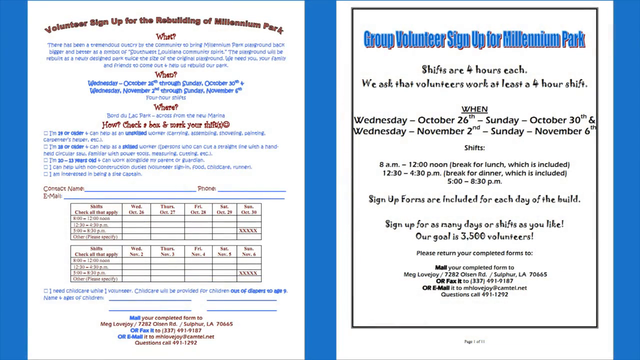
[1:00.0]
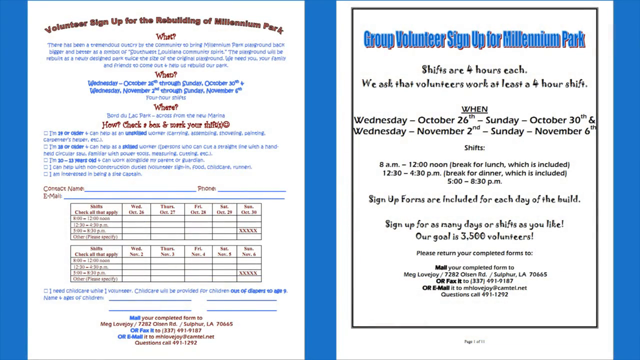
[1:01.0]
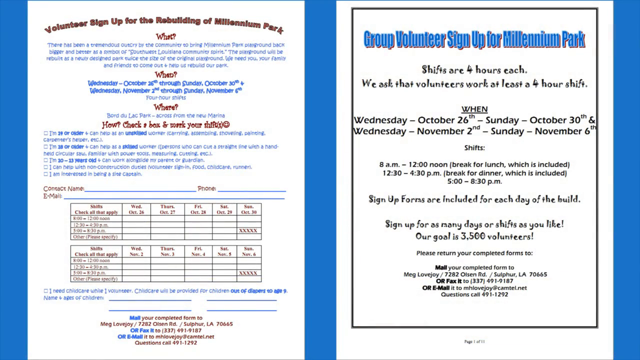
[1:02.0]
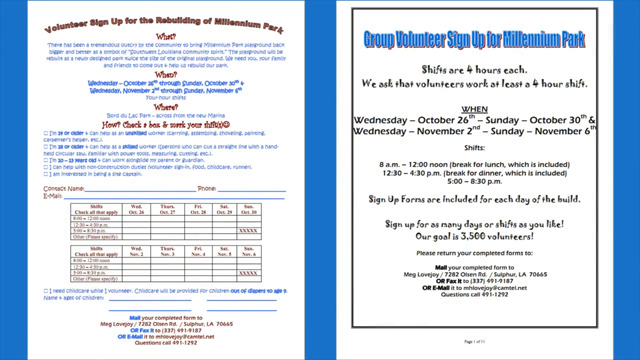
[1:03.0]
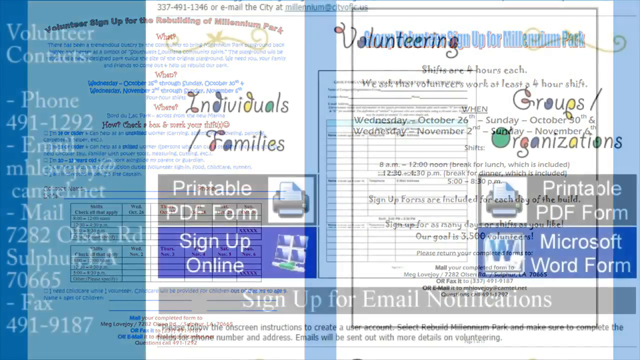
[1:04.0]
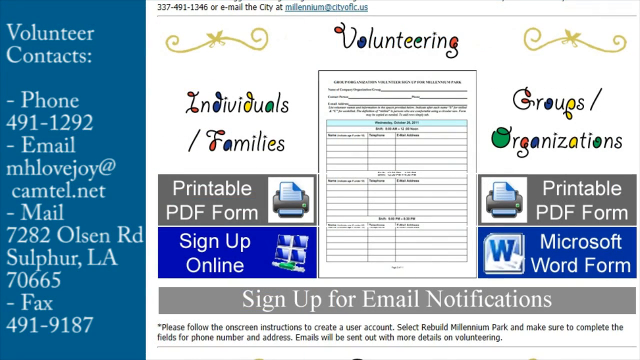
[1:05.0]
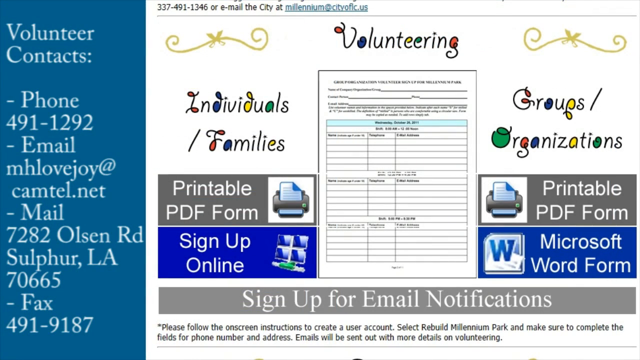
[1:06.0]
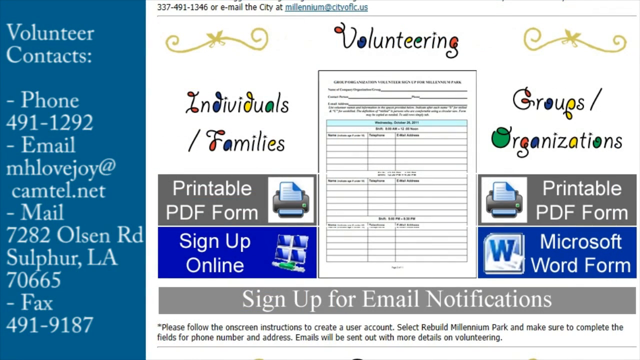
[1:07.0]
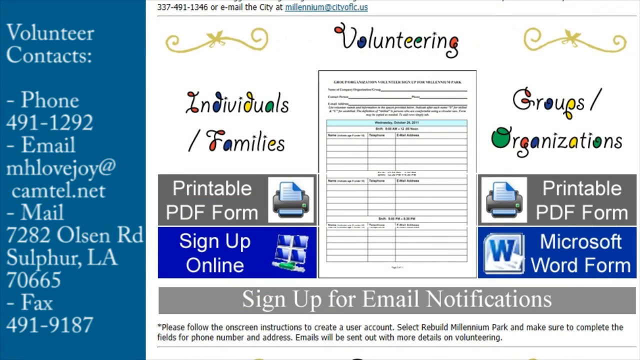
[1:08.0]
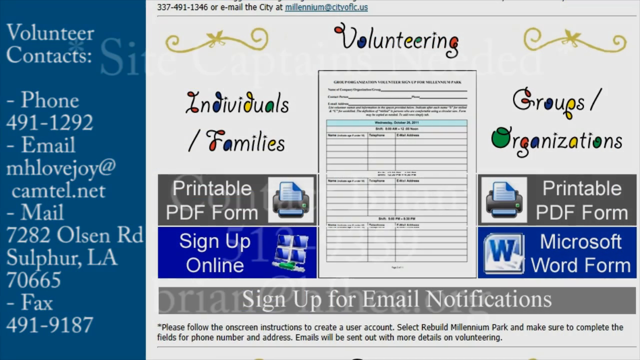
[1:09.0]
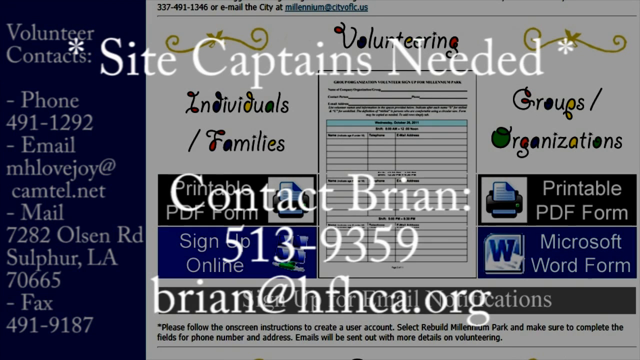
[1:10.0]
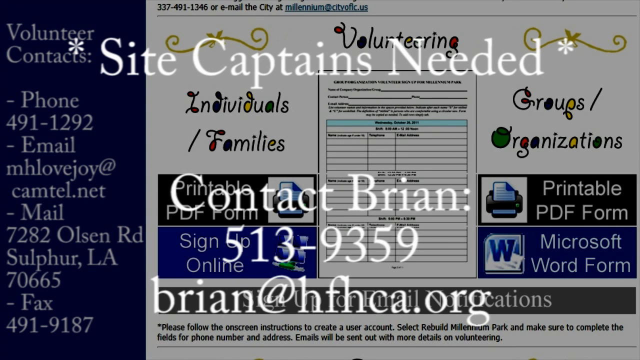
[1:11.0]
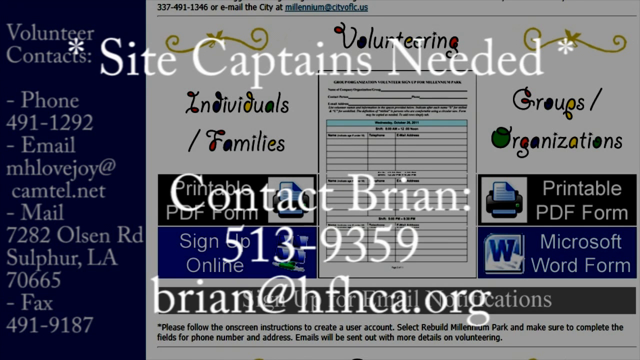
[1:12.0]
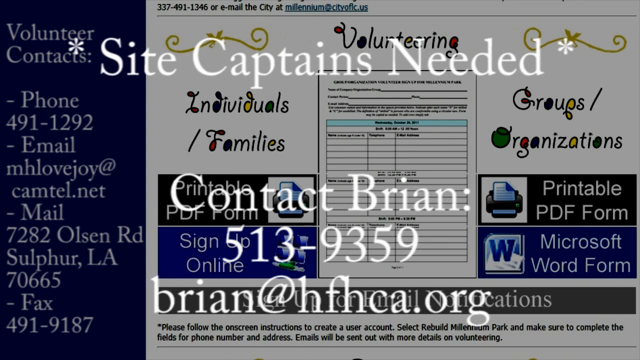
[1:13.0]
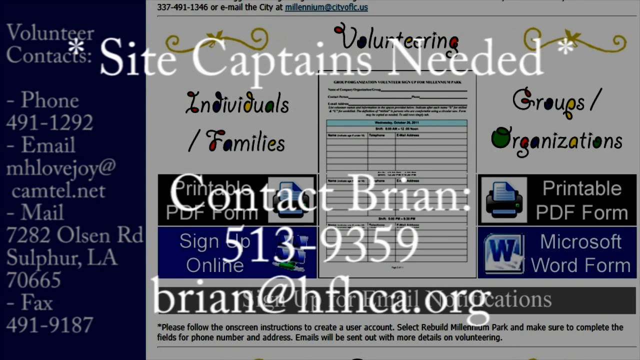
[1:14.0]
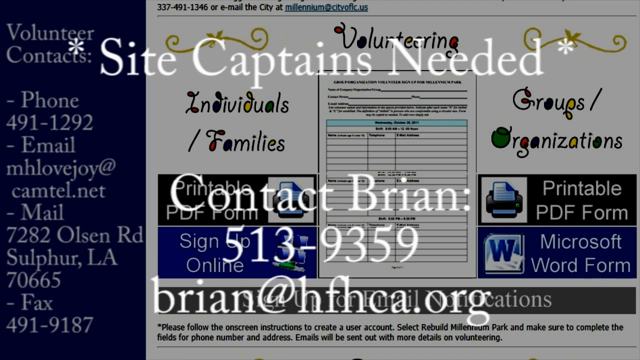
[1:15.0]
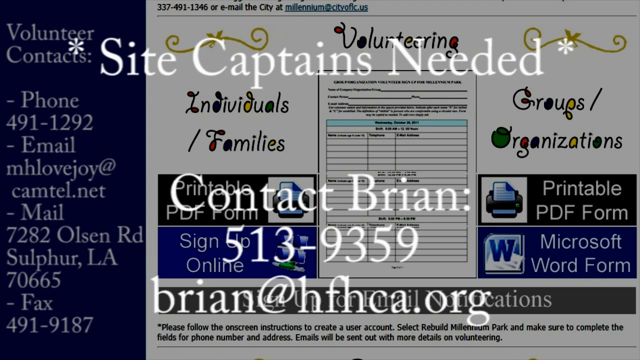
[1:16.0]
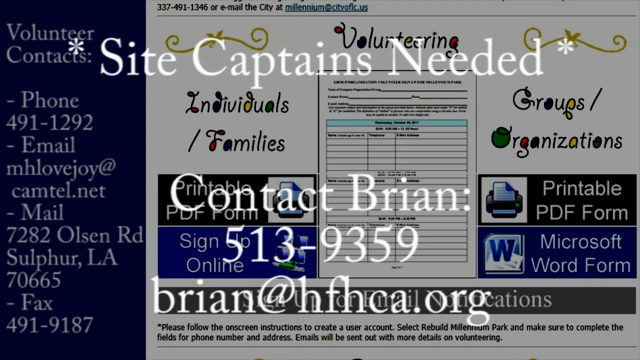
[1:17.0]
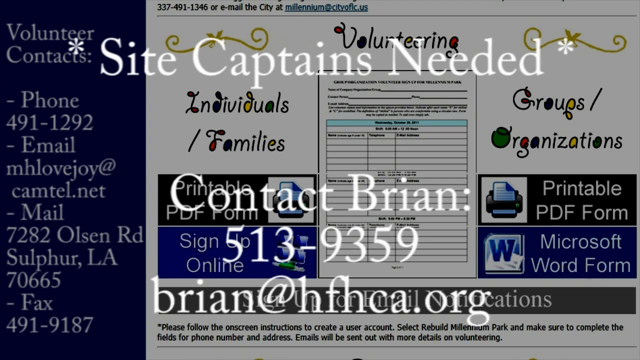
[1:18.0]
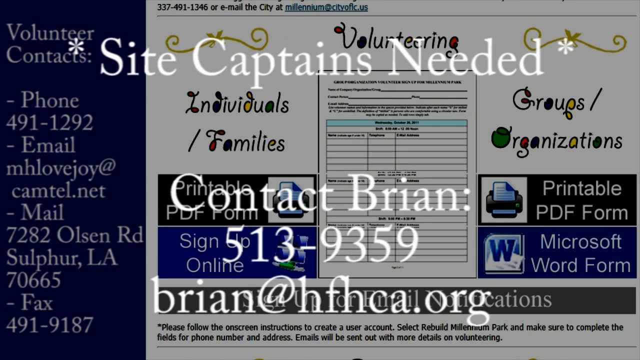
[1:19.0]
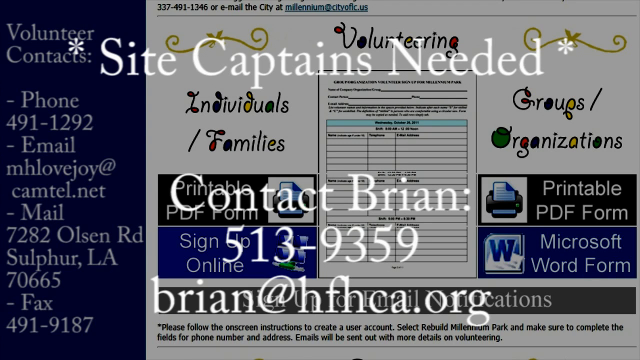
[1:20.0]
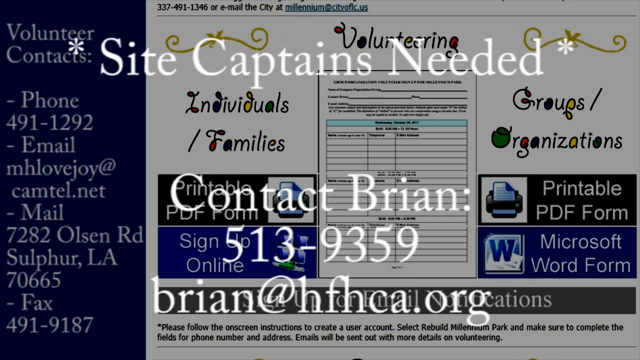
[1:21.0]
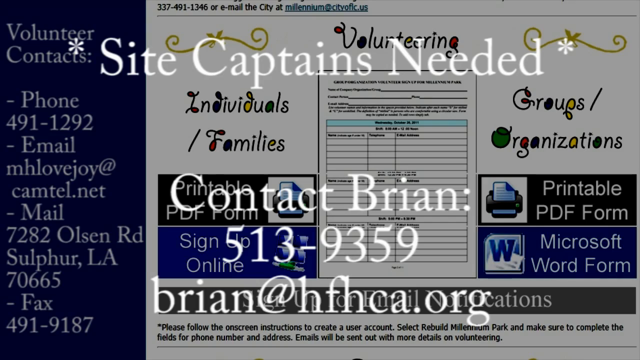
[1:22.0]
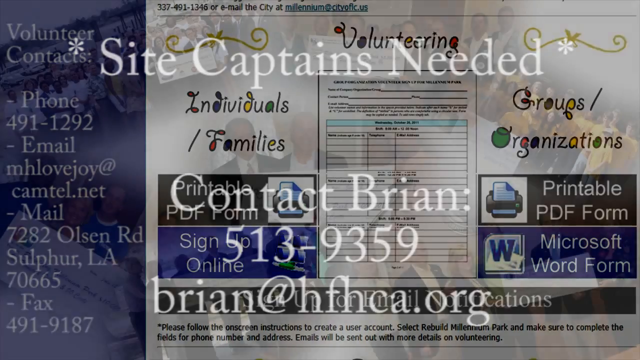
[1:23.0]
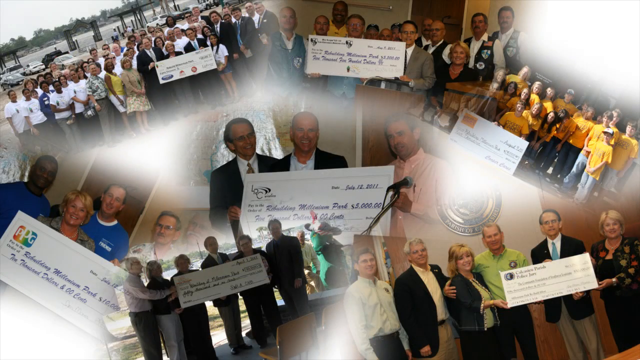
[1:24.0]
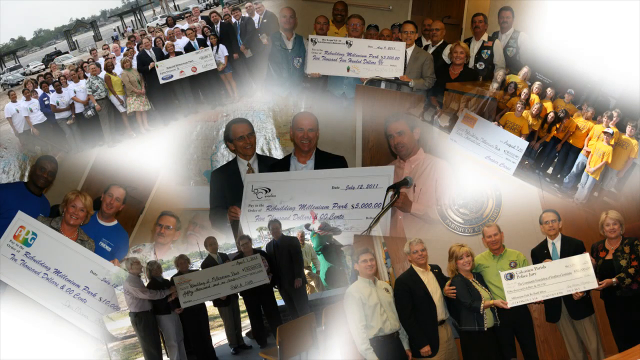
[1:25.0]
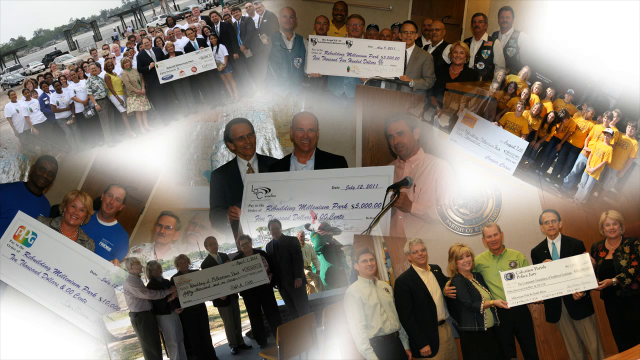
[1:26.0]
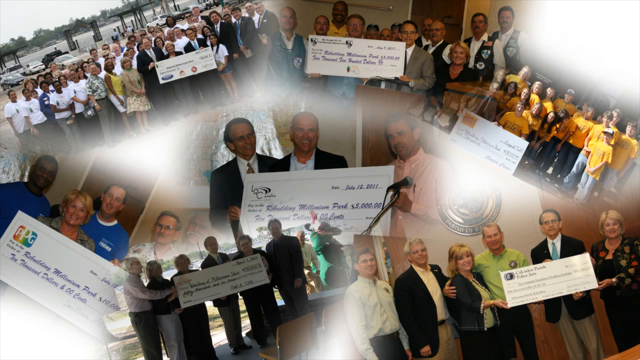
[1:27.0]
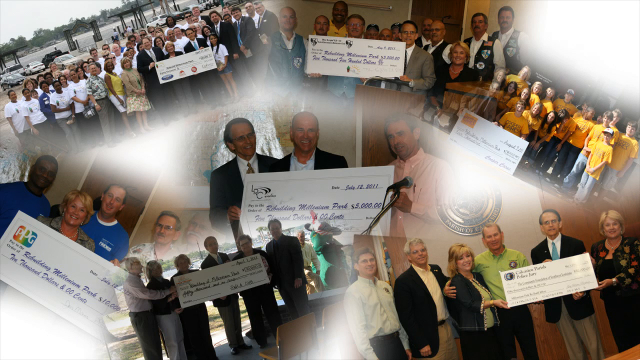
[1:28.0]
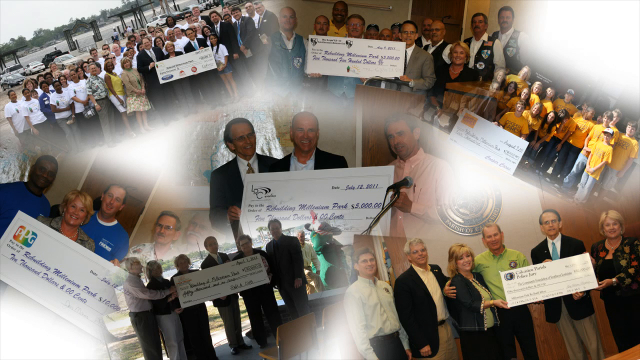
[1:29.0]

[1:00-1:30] Information is displayed on screen, including the date "November 6", "Sign up for email", a phone number and an email address. It then shows "site captains needed", along with Brian's contact phone number and a main address. Group photos follow, showing organizations, individuals and volunteers who helped build the park.